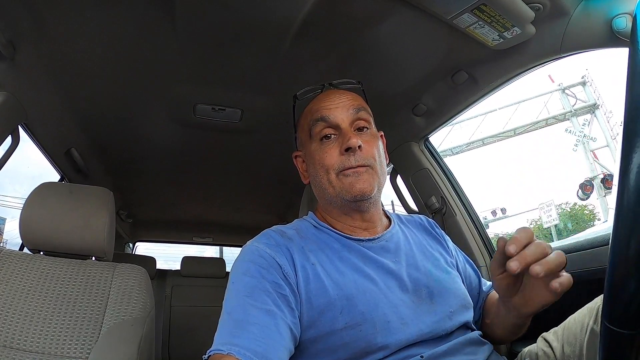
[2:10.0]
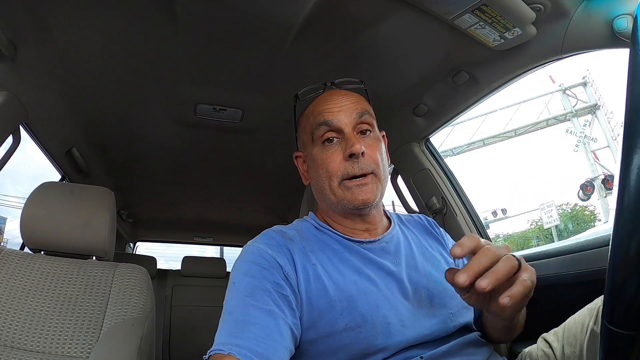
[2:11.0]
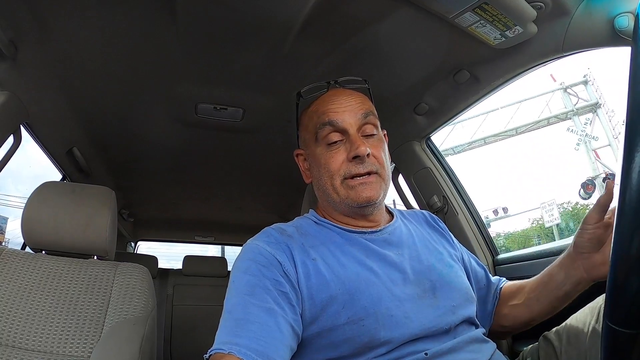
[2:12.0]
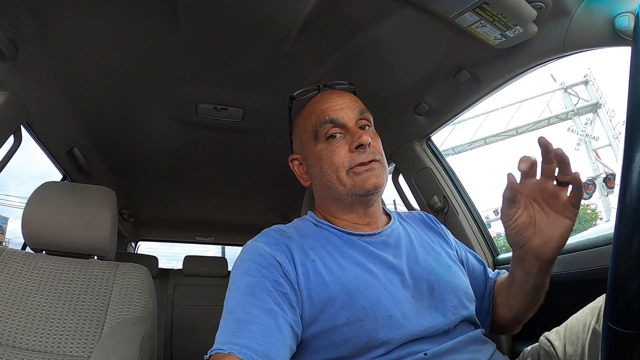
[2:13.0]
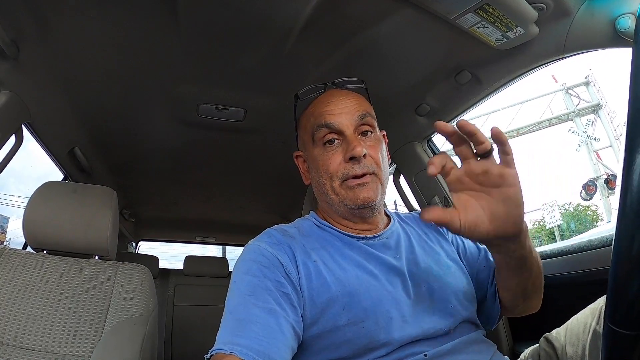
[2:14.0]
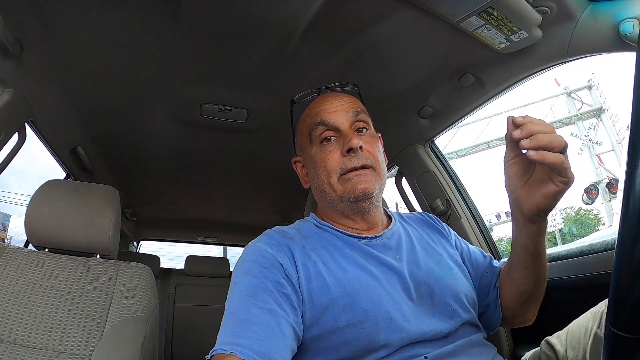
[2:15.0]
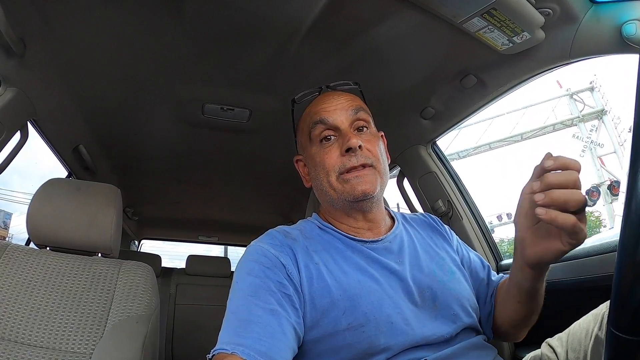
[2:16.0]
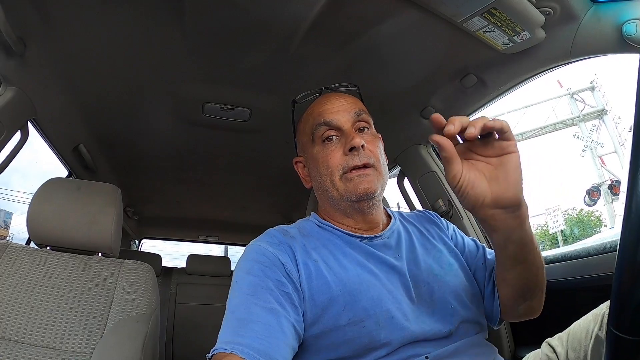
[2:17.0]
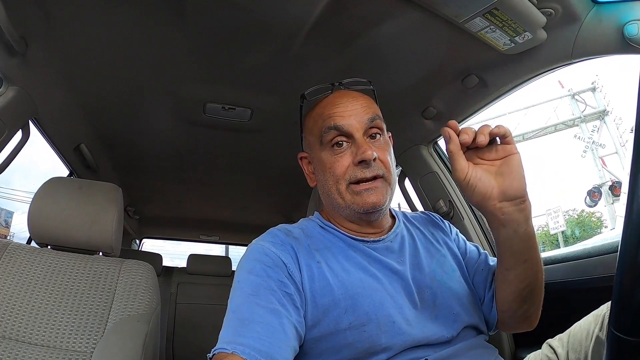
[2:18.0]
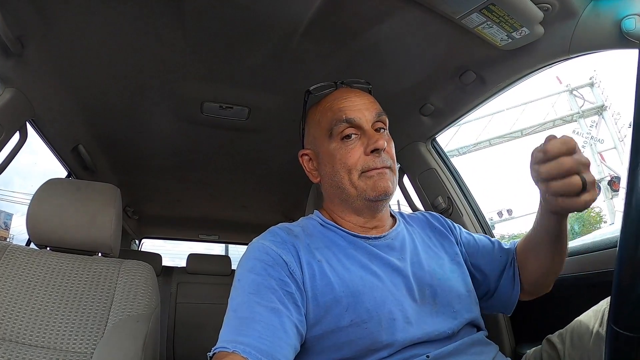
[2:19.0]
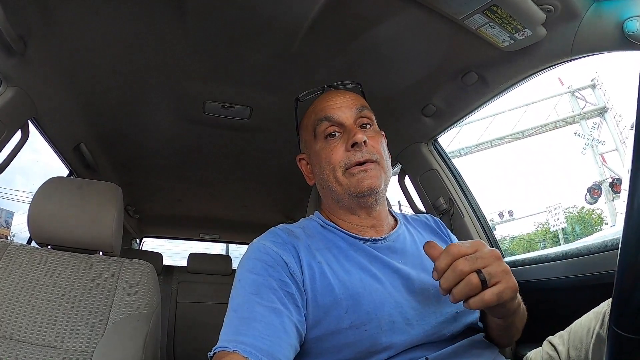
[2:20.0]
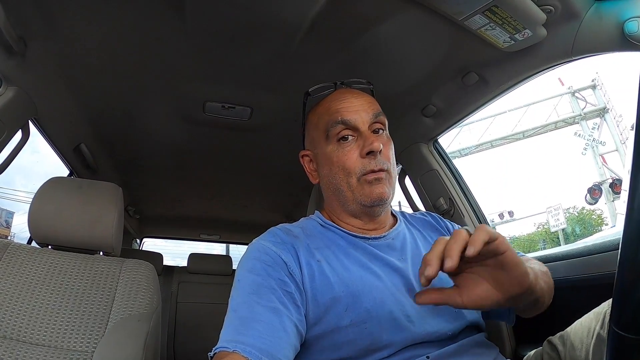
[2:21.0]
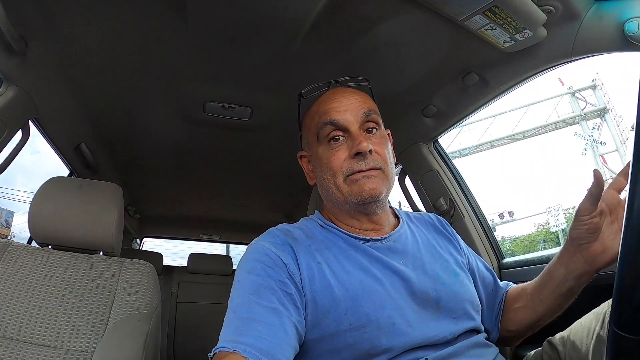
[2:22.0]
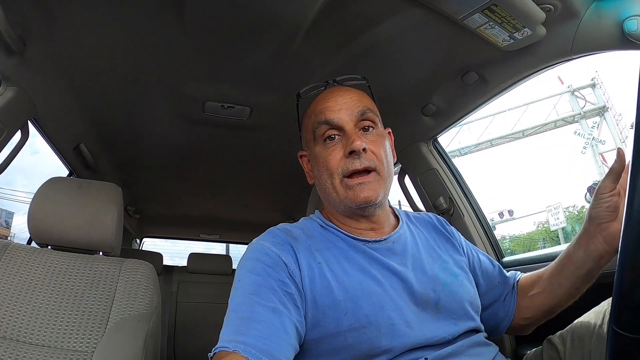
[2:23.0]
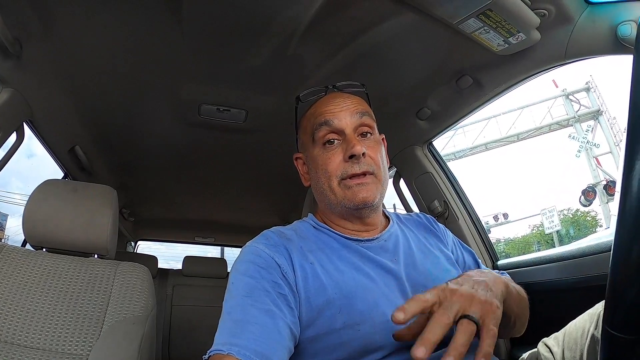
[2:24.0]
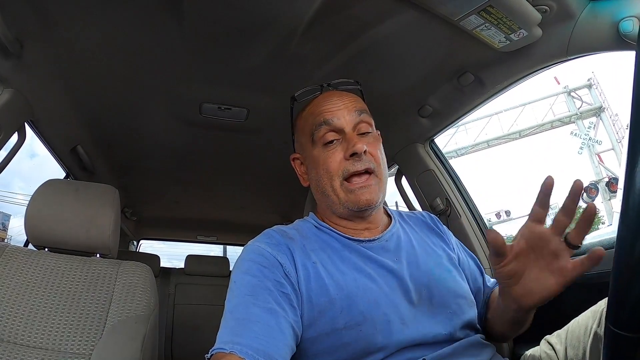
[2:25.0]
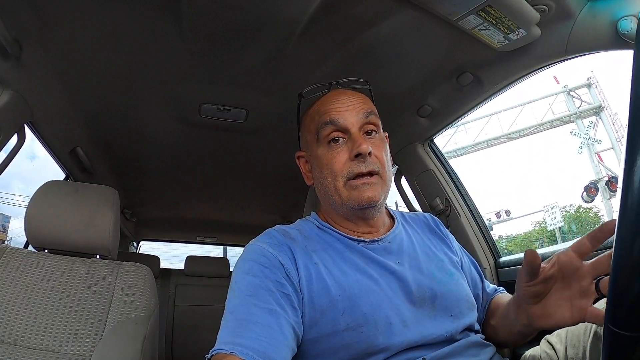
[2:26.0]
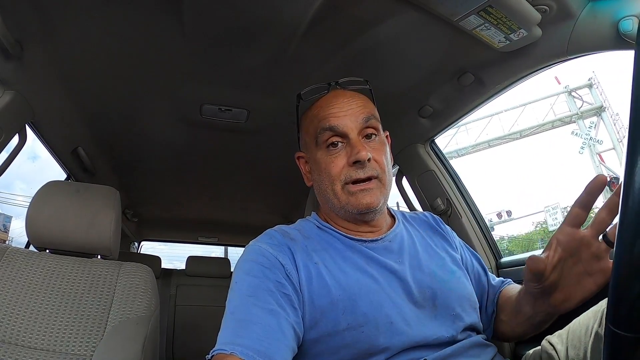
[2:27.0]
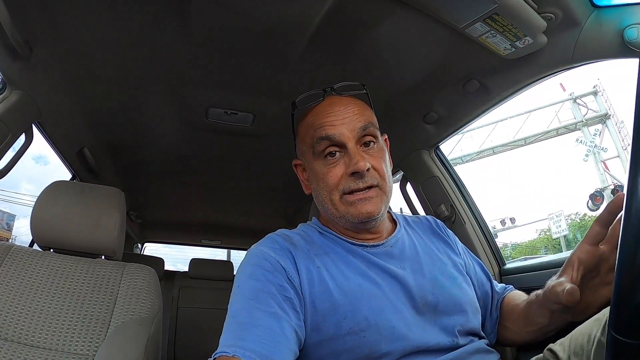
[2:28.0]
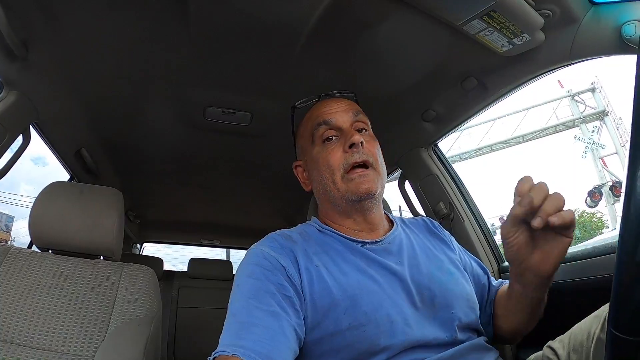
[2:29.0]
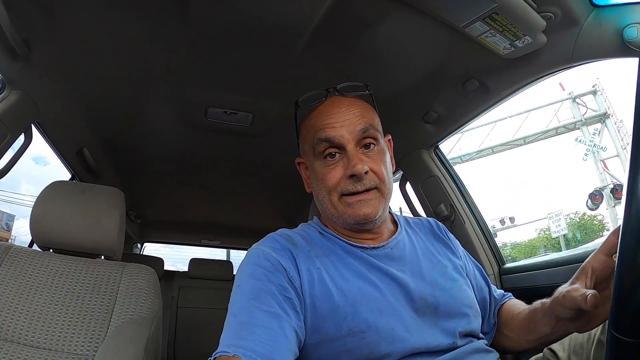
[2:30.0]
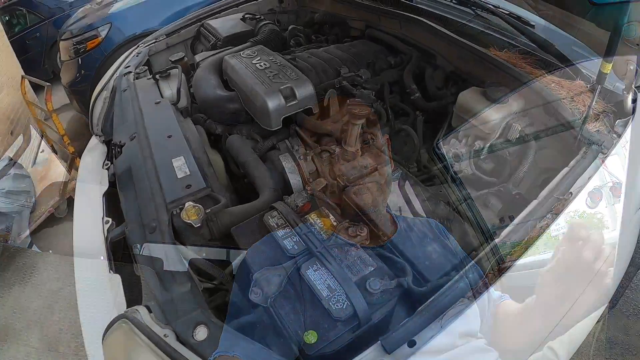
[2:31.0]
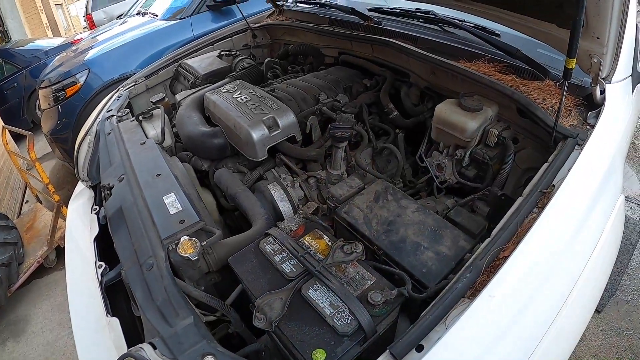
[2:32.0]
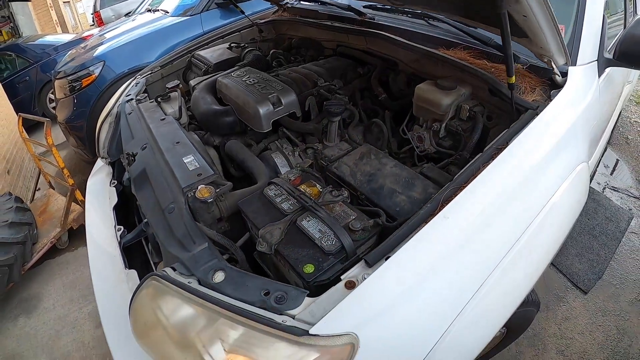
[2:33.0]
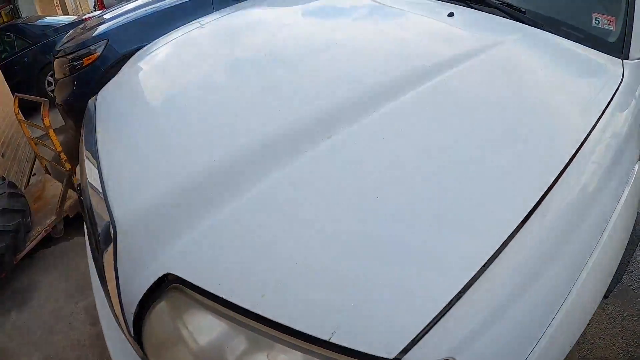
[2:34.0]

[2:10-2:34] The man who has been holding the camera shows his face. He is sitting down, wearing a light blue shirt and his glasses. Through his window on the right side of the screen there are lights and a sign saying "railroad crossing", suggesting he may have pulled over near a train track. As he talks he gestures with his left hand, raising his hands, putting his pointer finger and thumb together, and waving his hand toward the right side of the screen. The video then returns to the white vehicle with the hood up, and he puts the hood down.